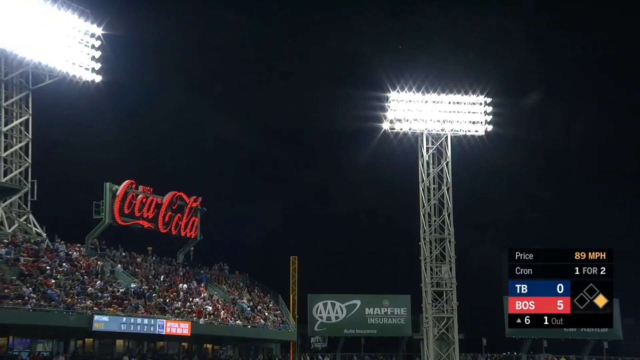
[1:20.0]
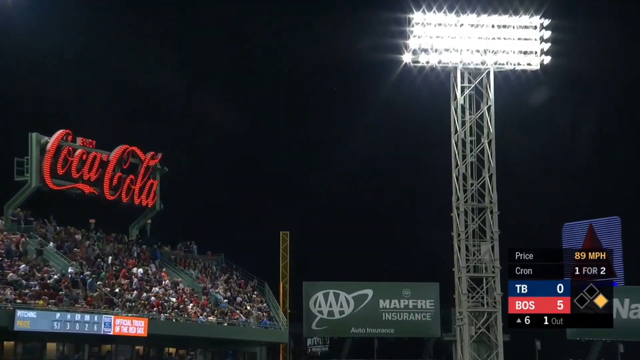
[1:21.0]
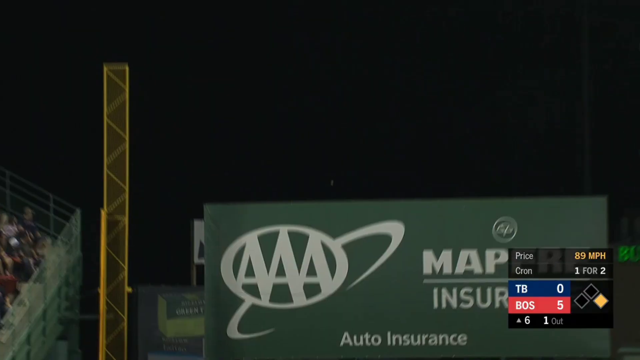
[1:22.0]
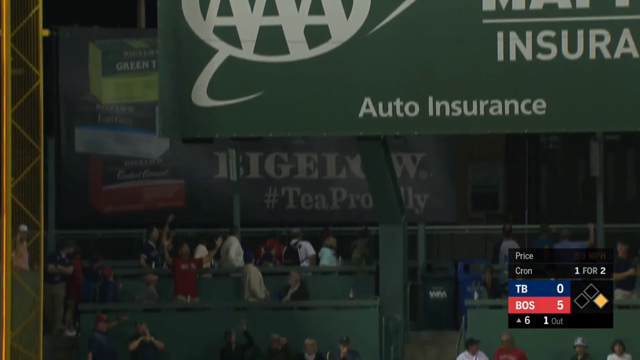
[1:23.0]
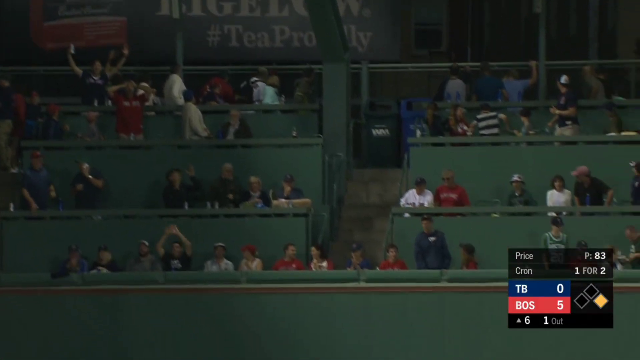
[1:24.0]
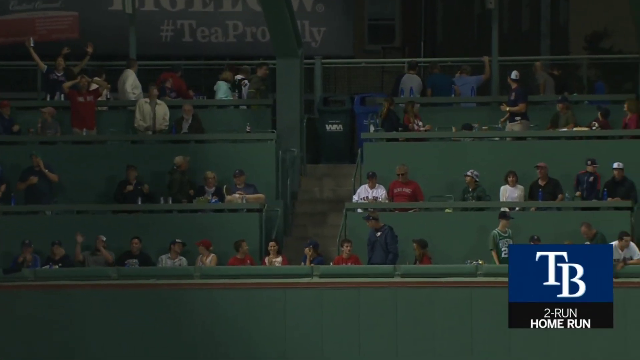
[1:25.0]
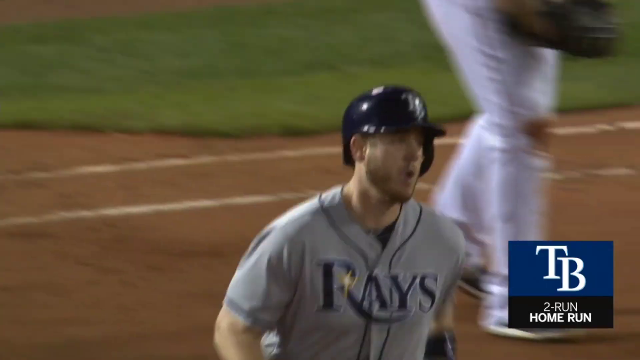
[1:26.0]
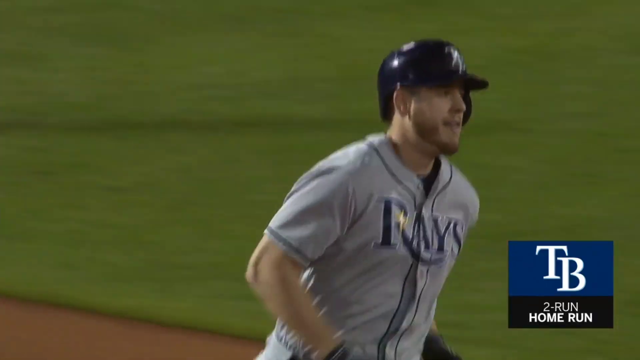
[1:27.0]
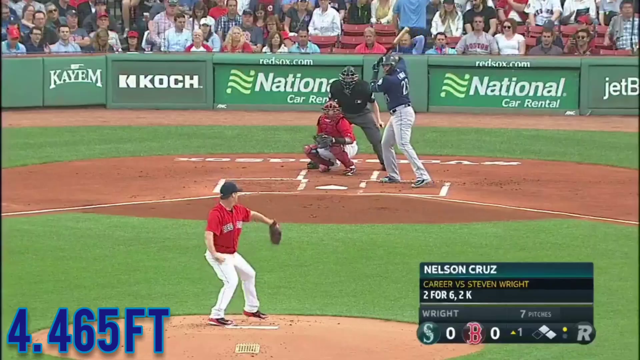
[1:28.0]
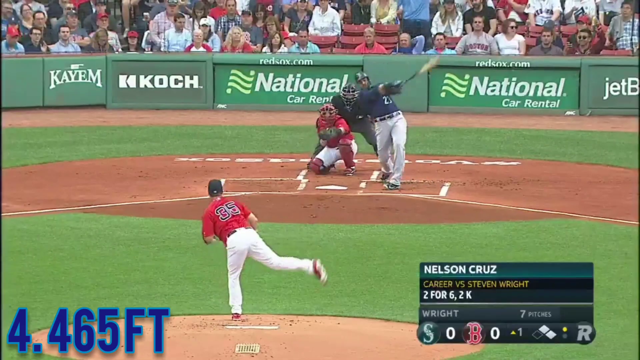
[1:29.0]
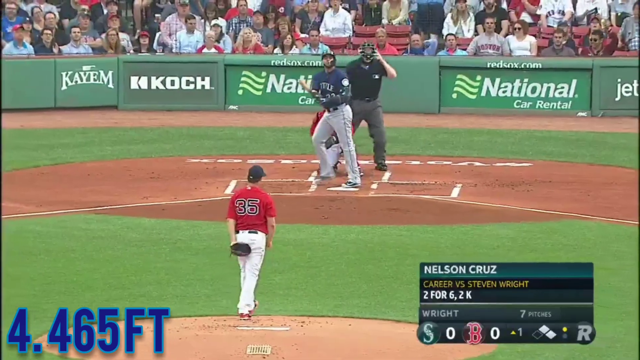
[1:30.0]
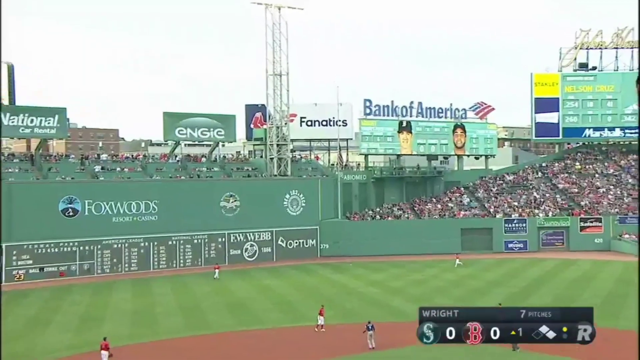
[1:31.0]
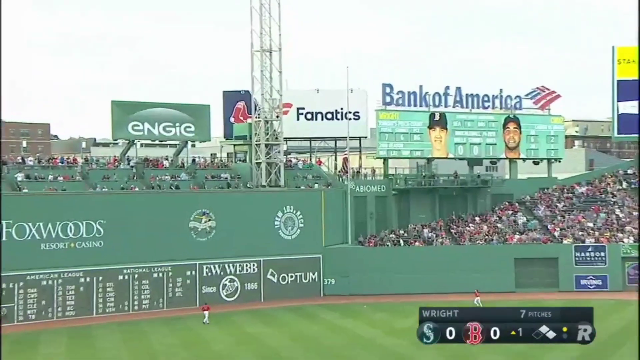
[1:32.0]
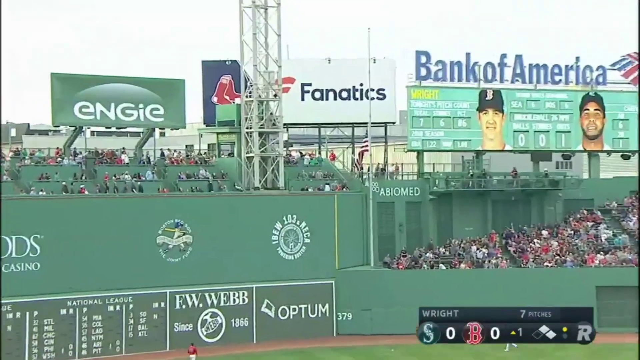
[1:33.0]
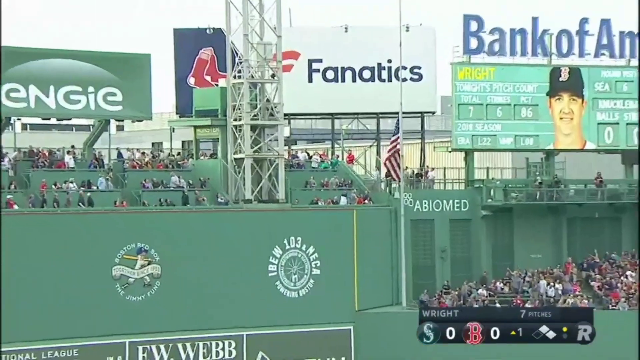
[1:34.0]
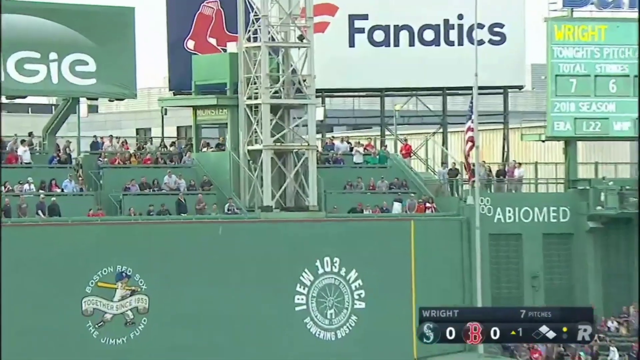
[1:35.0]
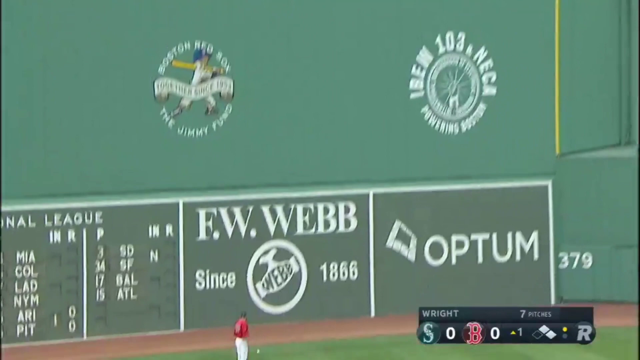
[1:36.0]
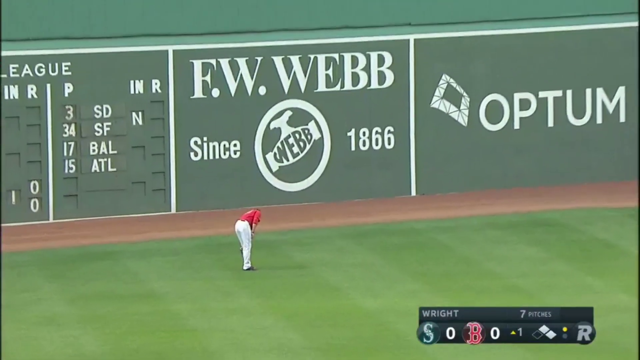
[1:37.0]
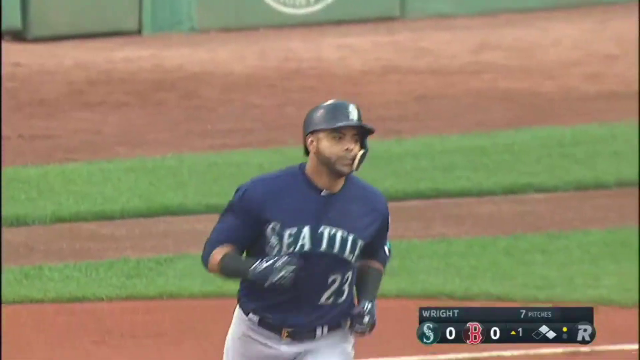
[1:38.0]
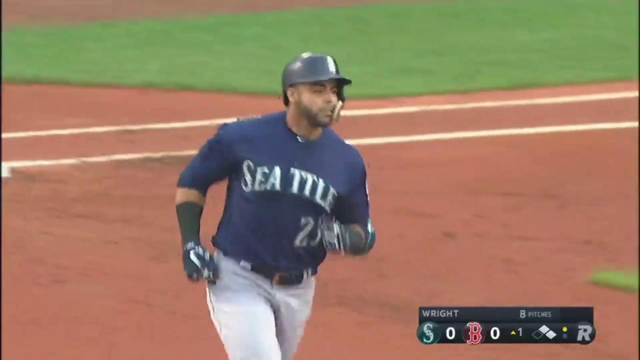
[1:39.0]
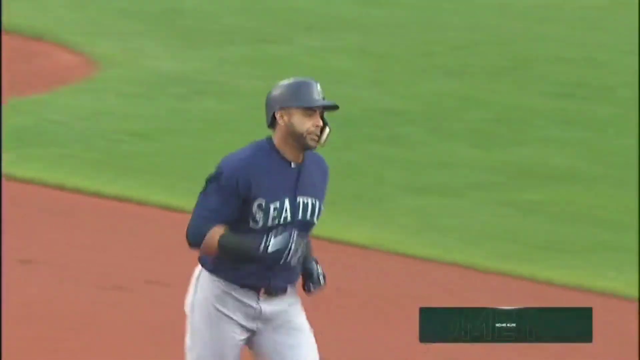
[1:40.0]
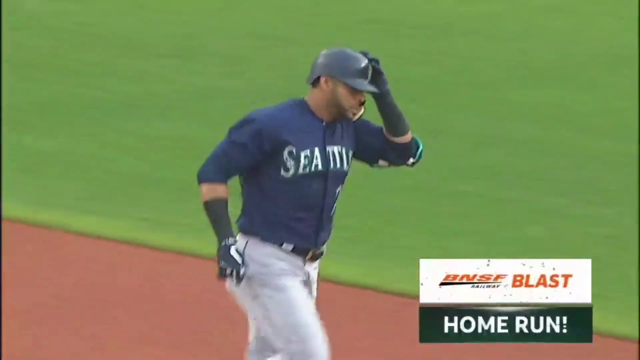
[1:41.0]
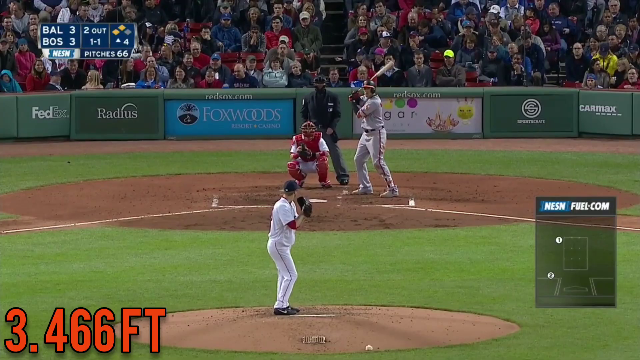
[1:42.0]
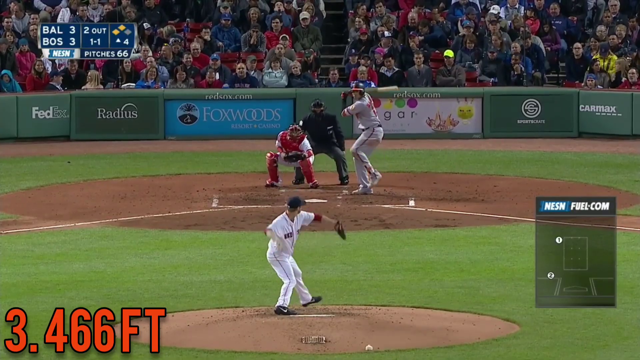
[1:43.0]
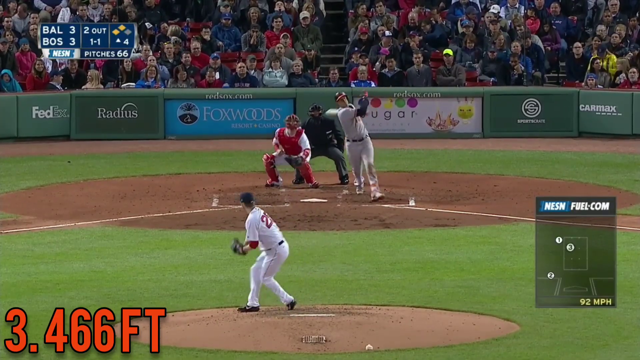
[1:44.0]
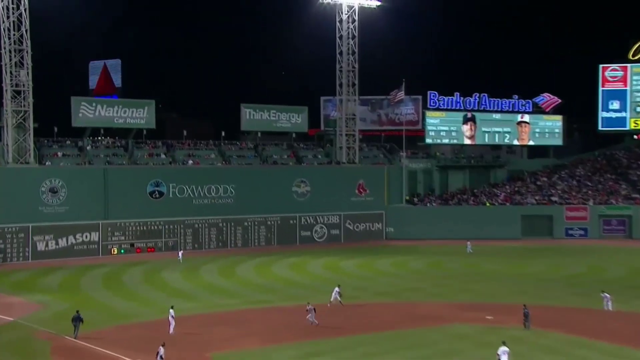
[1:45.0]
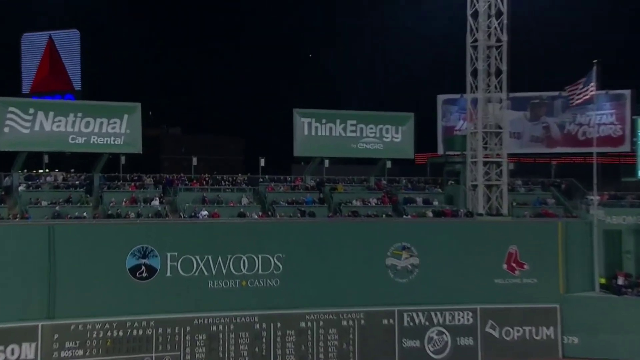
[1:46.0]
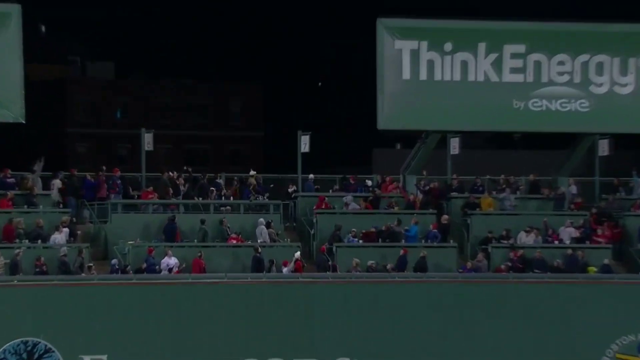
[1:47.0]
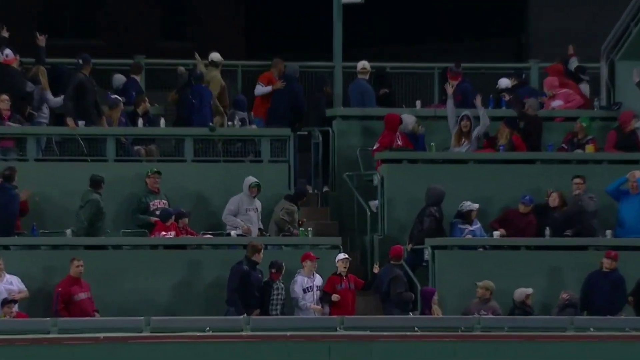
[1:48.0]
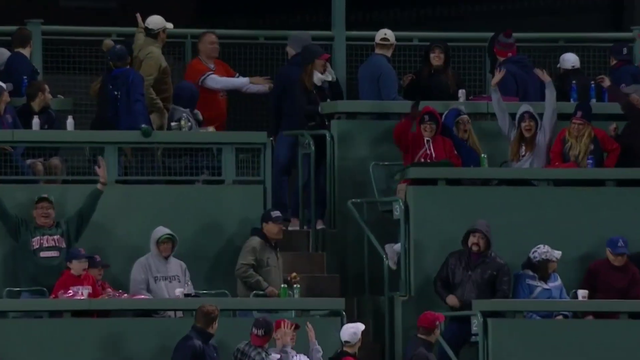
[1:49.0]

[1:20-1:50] In a night game at Fenway Park, with Boston leading Tampa Bay 5-0 in the top of the sixth, the previous home run ends: a two-run home run for Tampa Bay that went 465 feet. Next, Nelson Cruz, the batter, in a Royals uniform, faces pitcher Stephen Wright in a Red Sox uniform. The right-hander delivers, and Cruz, batting right-handed, smashes the ball high into left center field, where it falls deep into the stands, then bounces onto the field. The left fielder dejectedly retrieves it. A legend in the lower left of the screen shows the home run went 466 feet. Another home run then goes into left field, this one hit by a member of the Baltimore Orioles.